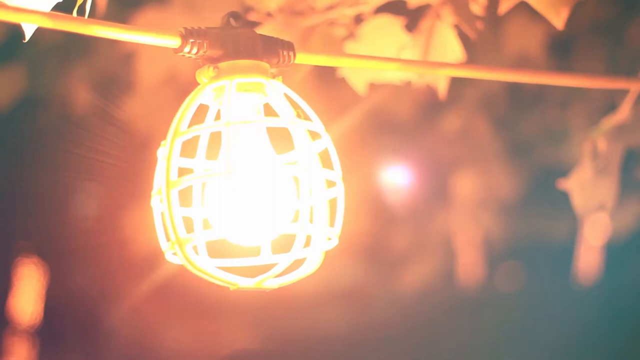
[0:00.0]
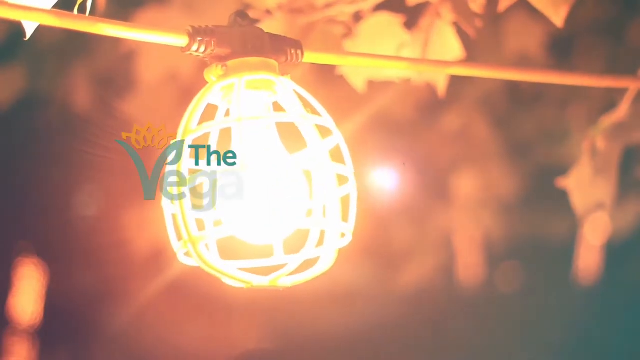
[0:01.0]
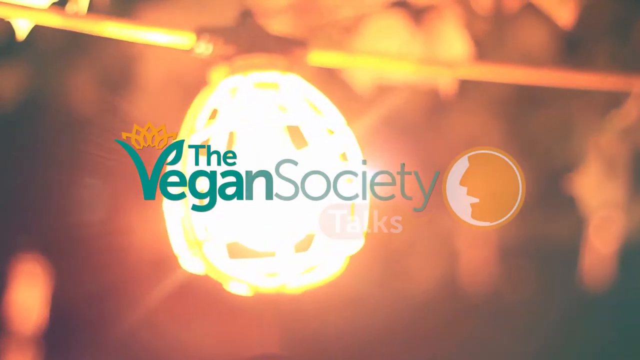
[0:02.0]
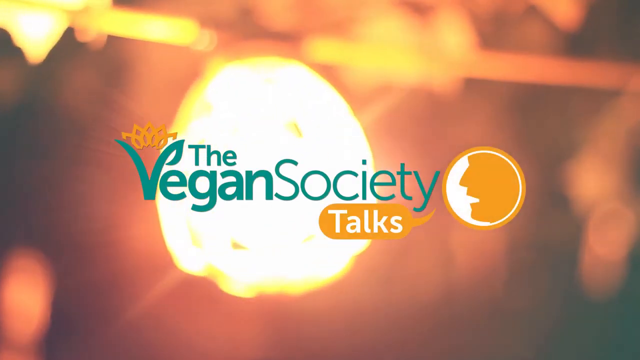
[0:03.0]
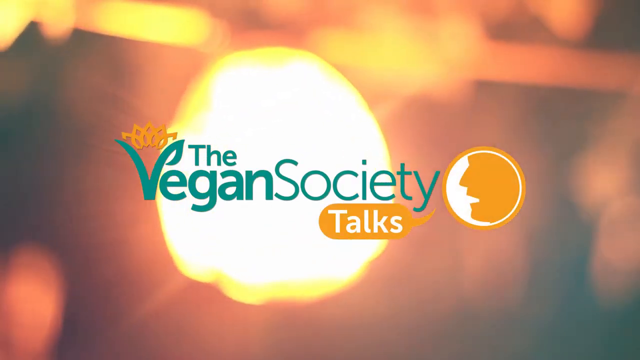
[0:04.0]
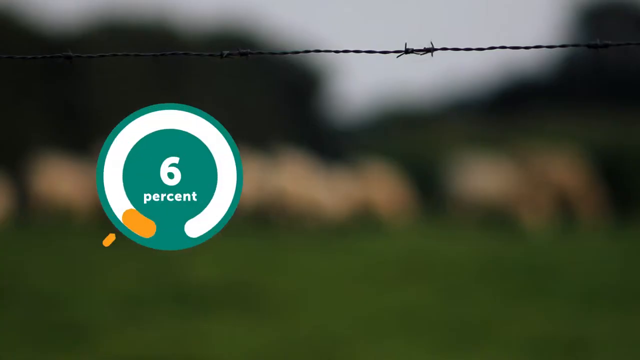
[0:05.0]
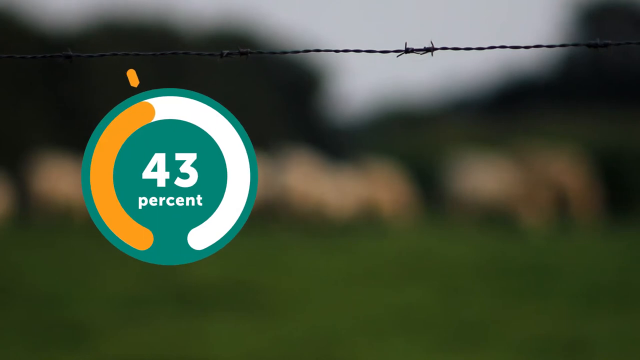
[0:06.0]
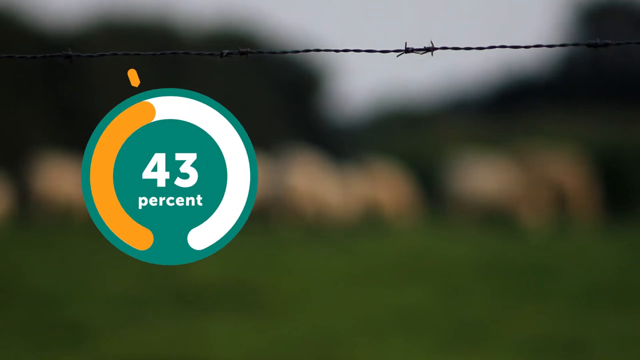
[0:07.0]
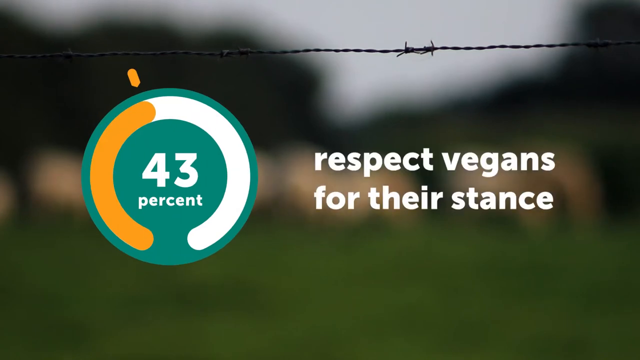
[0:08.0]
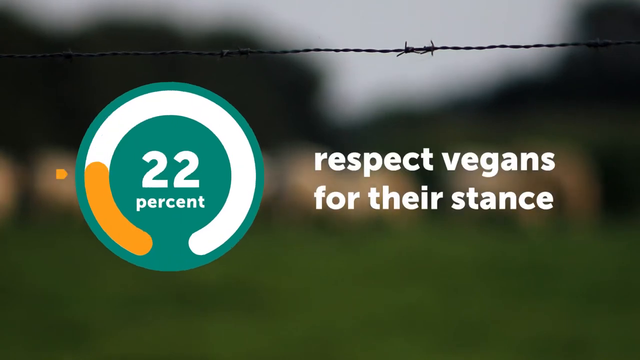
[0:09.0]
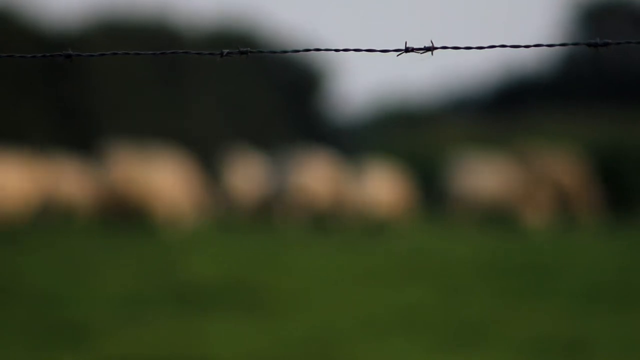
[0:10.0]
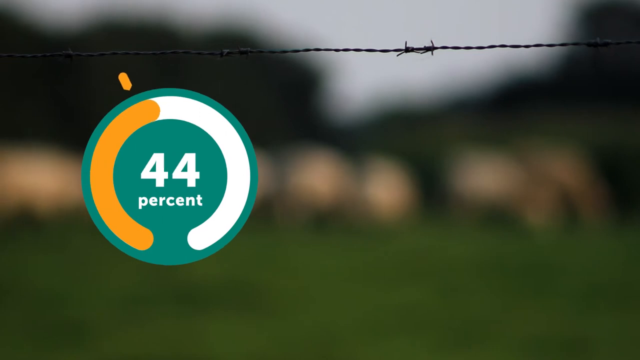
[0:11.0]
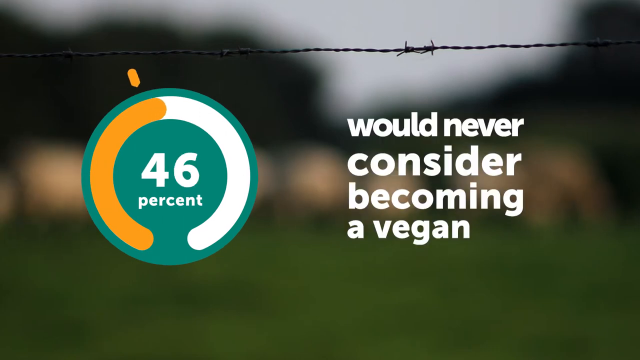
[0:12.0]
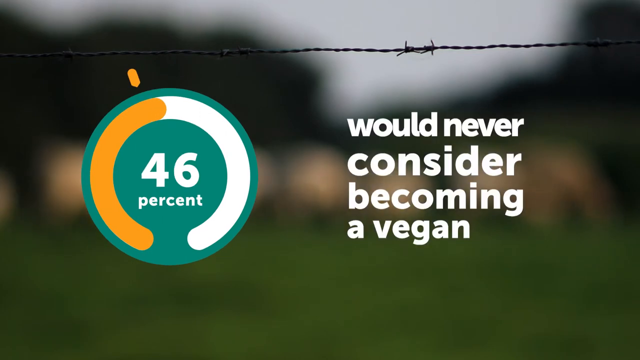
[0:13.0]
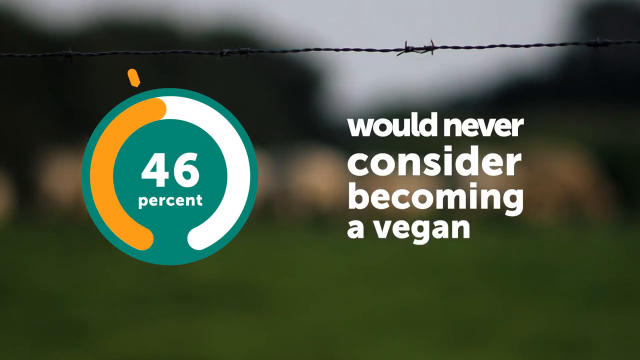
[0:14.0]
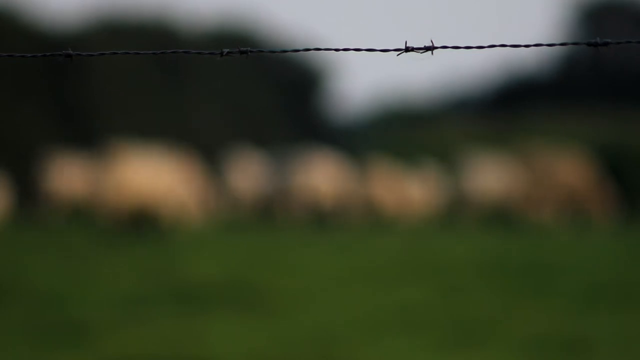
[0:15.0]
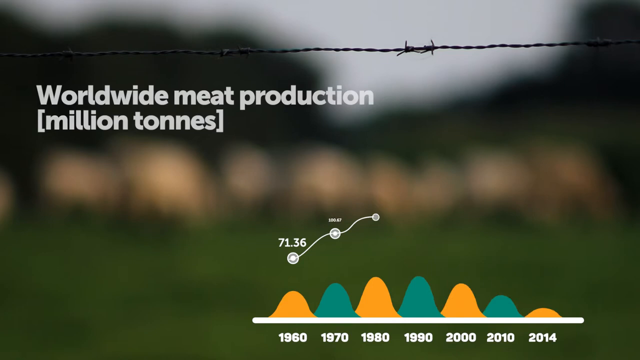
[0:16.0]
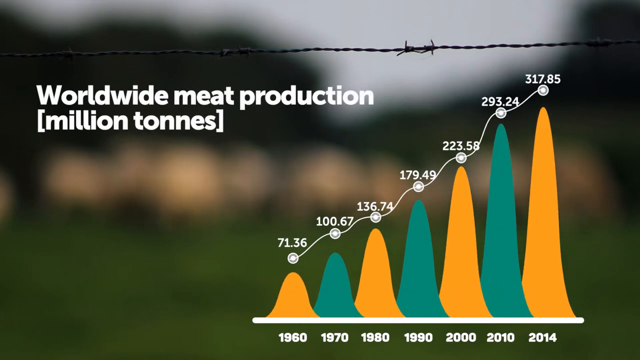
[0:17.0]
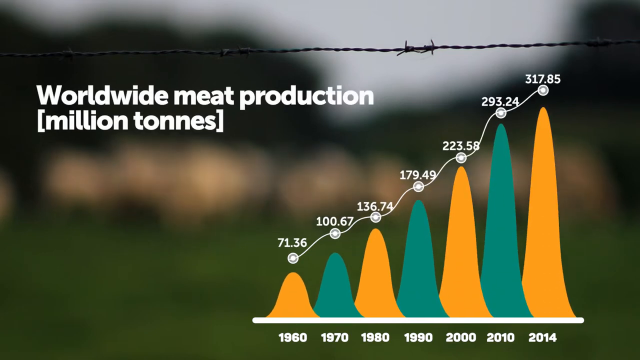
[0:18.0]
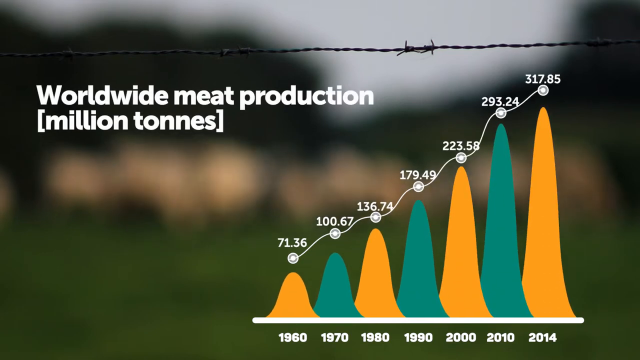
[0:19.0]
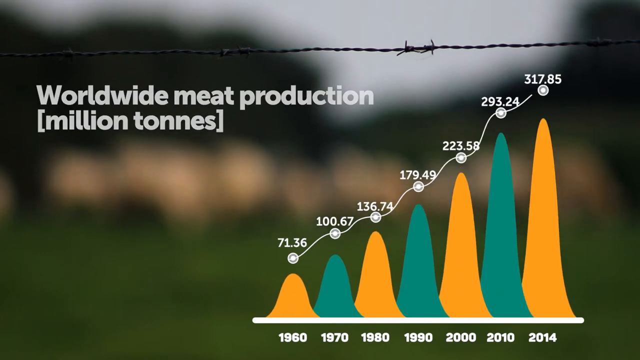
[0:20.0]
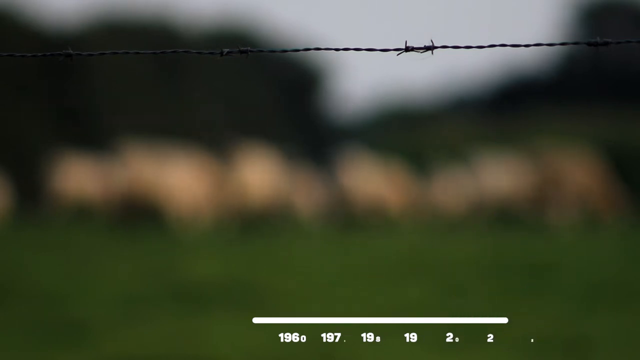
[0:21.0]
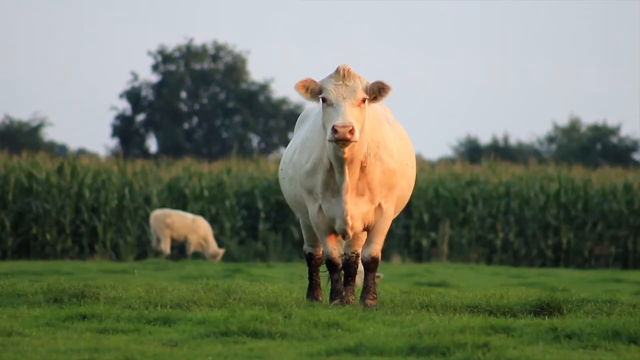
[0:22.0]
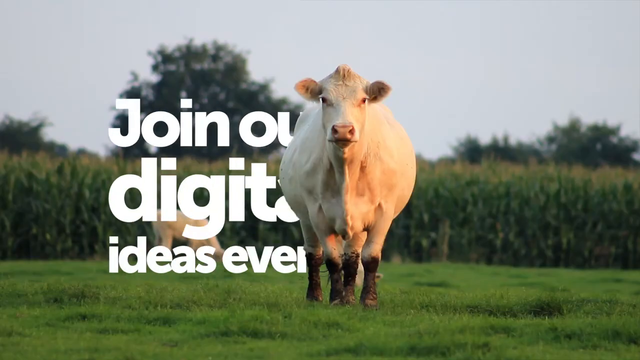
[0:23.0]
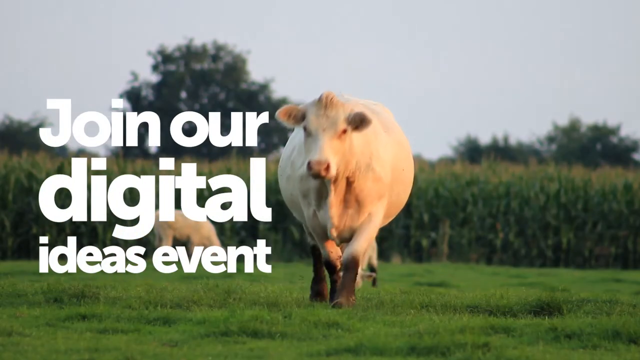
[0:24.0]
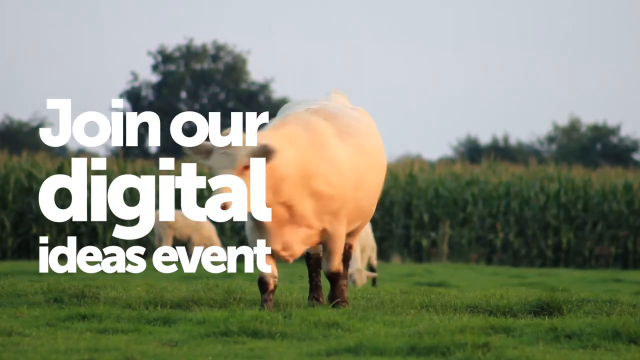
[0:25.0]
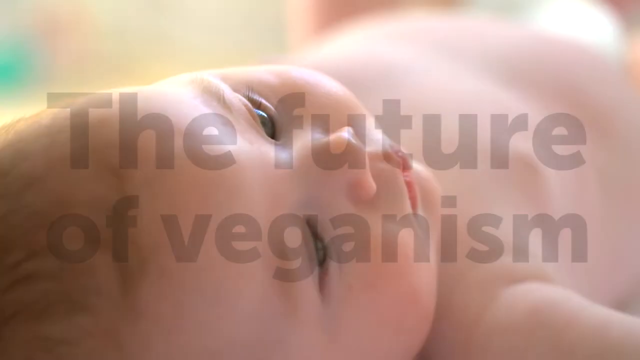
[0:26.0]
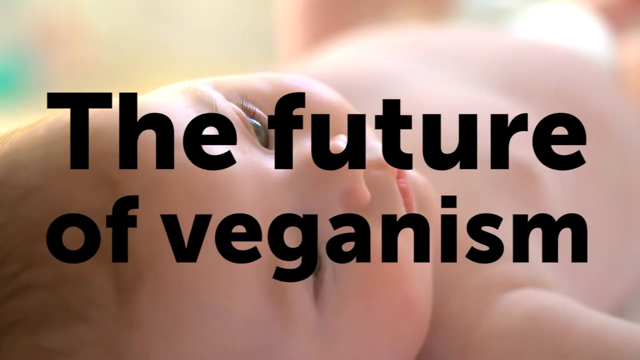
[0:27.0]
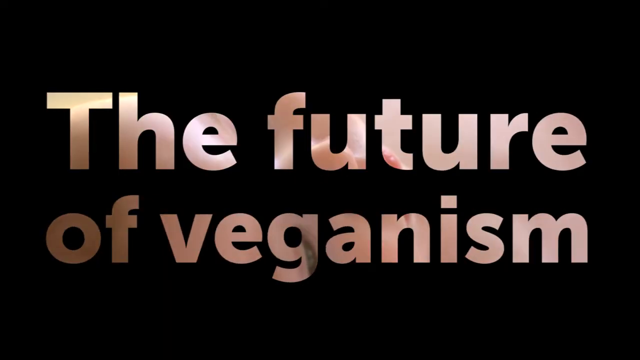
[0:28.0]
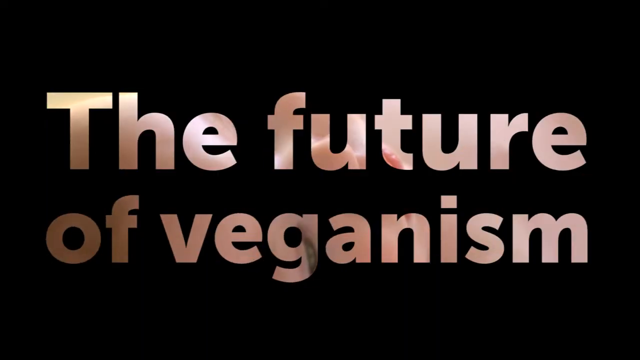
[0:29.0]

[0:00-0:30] A yellow cord with a light encased in a cage appears; the light is on and swings side to side. The title "The Vegan Society" follows, with "vegan" in green and "society" in green. Next comes the sign of a person and "talks" in orange. Percentages are shown: "18% respect vegans for their stance" and "46% would never consider becoming a vegan." A graph shows worldwide meat production, which seems to keep rising. A white cow stands with a field in the background, and text says to join "our digital ideas event." As the cow begins to walk, a baby appears in the background along with "the future of veganism." The screen flashes and the background changes, and where the baby was becomes black.